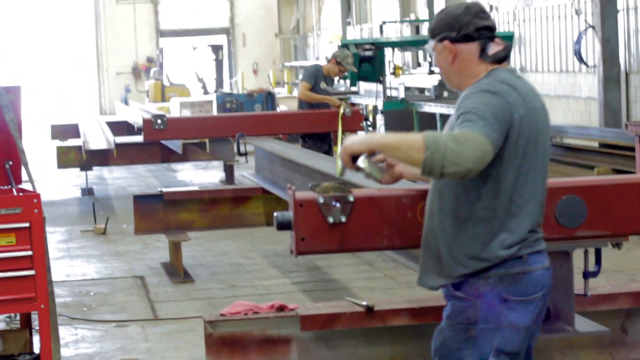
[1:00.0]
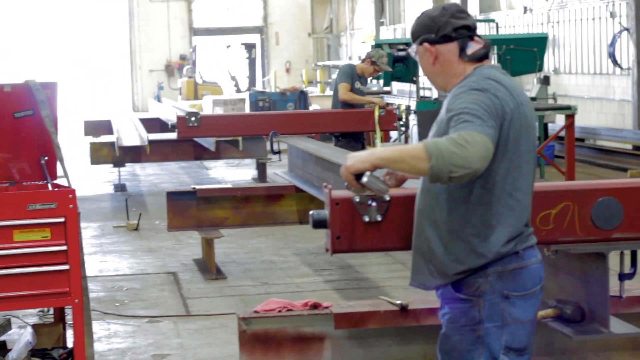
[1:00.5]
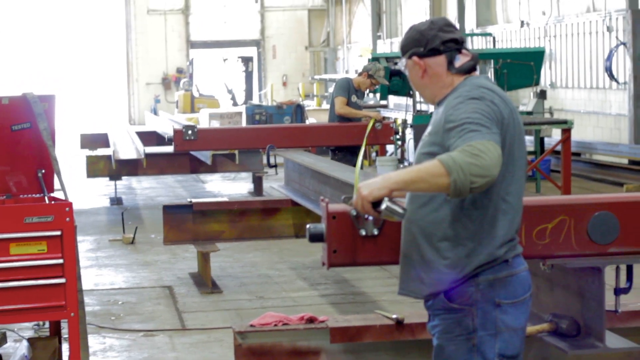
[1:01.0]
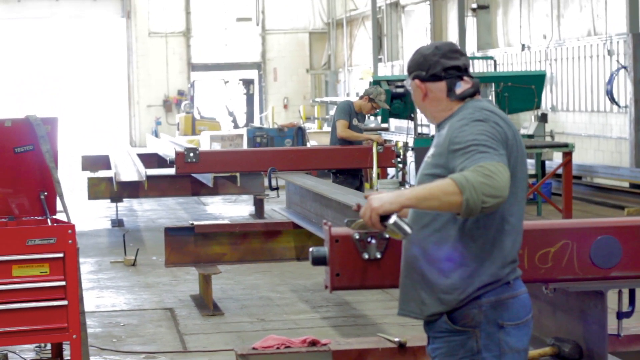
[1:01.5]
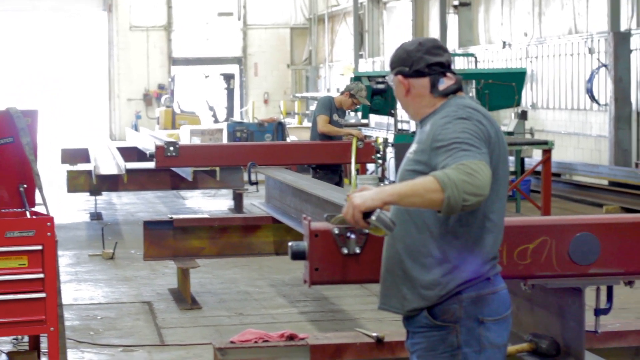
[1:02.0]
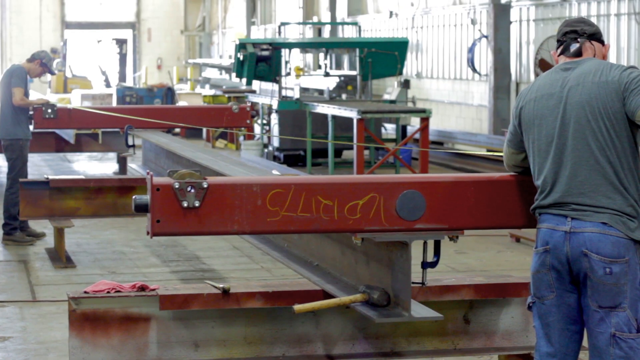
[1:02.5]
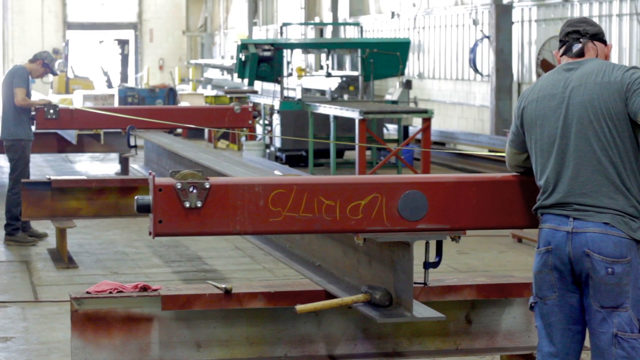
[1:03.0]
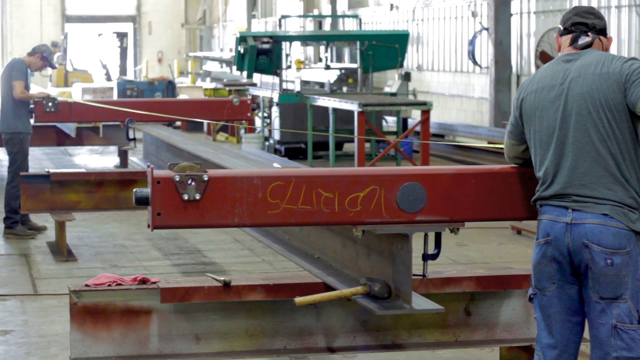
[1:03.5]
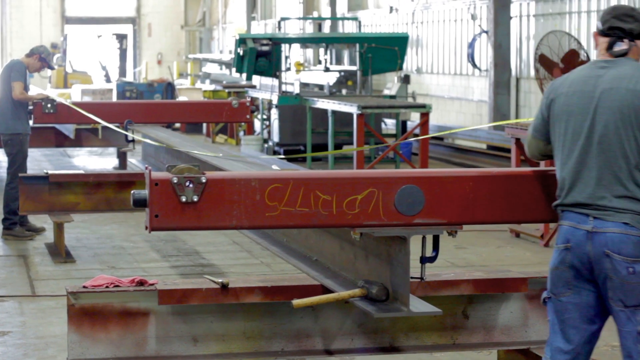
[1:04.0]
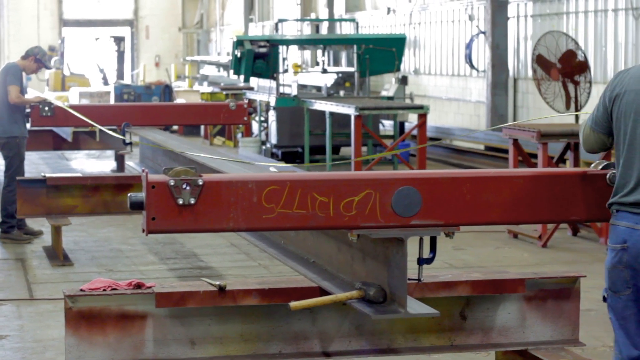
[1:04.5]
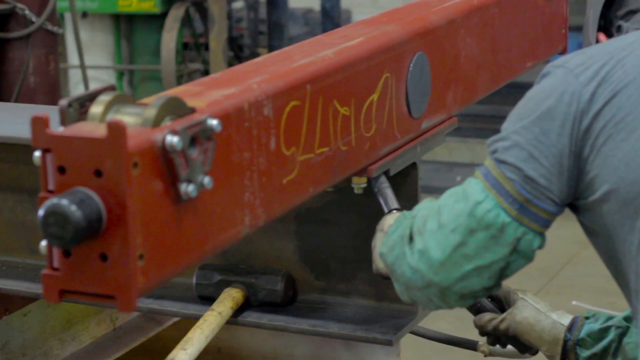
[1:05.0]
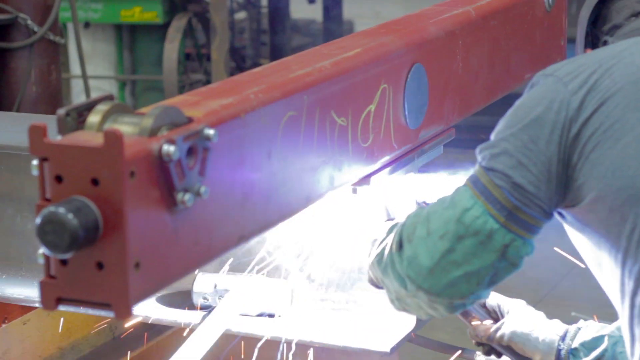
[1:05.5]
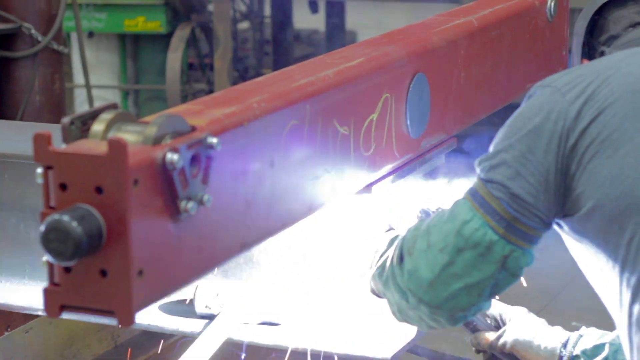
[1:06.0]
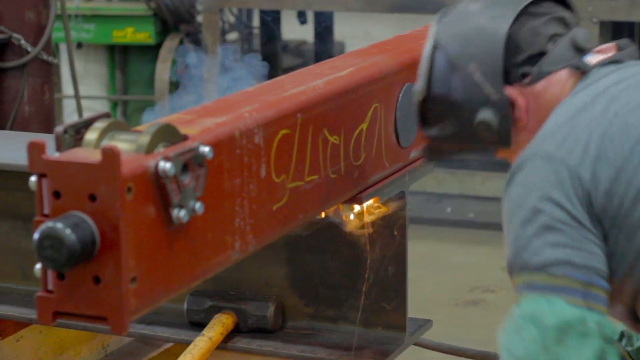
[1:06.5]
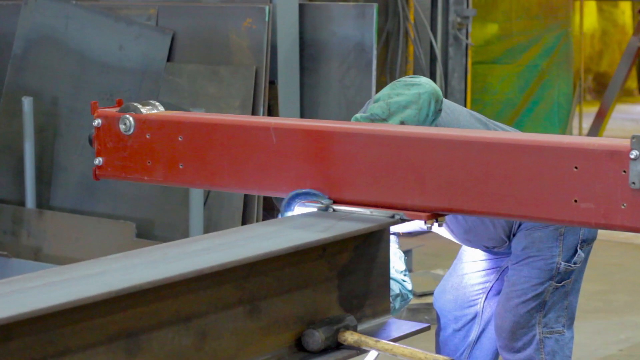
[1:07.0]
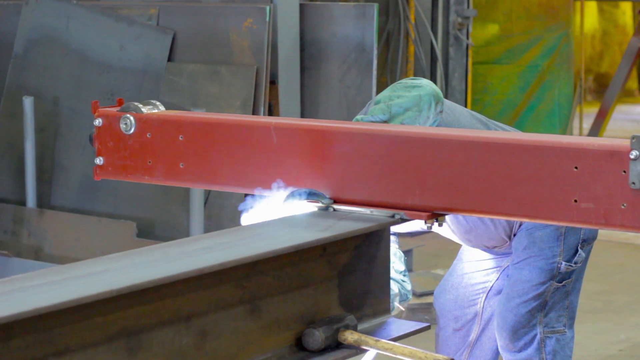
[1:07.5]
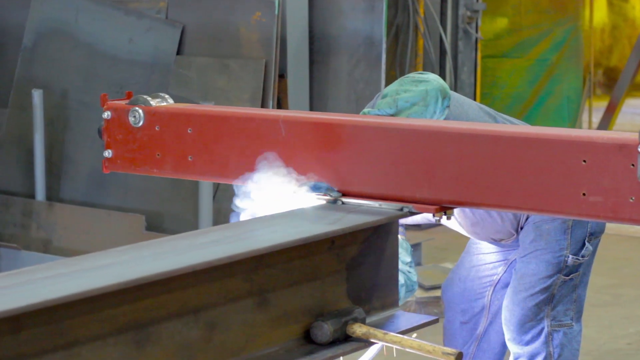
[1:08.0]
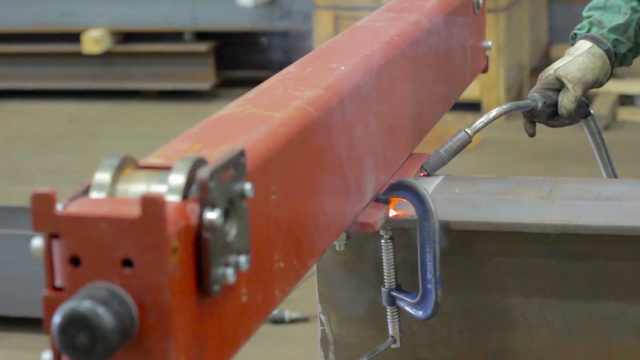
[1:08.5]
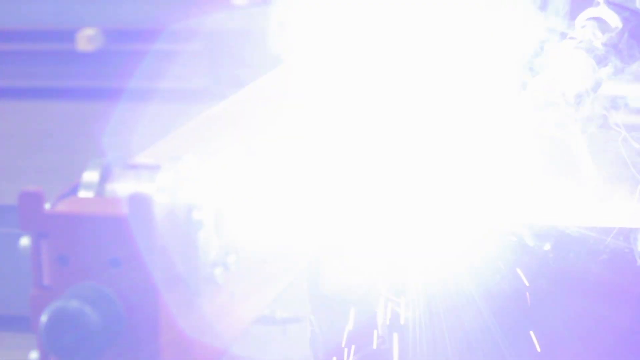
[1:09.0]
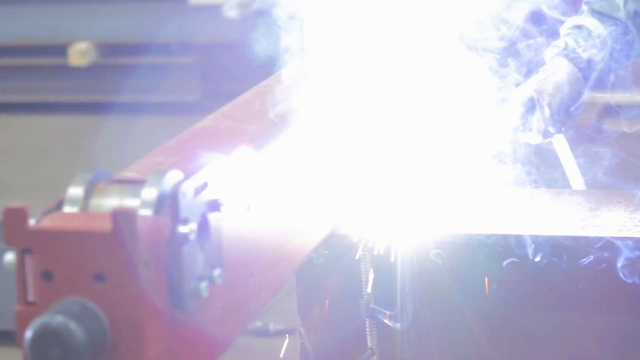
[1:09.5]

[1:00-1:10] Two short shots show the younger and older men using a tape measure to measure the distance between the red bars secured on the gray platform. The older man then uses a device that produces bright blue sparks. Another shot shows him using the device from a different angle, with the older man behind the large red bar. The camera briefly films only the bright blue sparks and smoke from what the older man is using on the large red bar, without showing him.